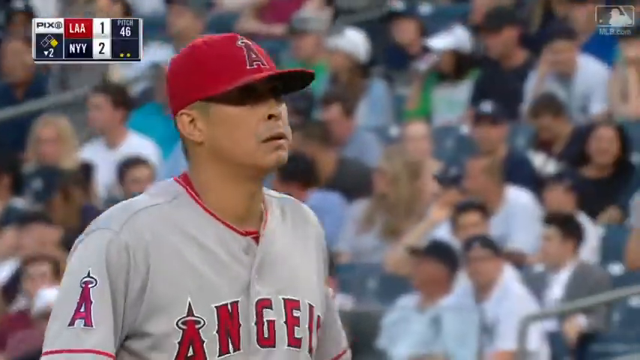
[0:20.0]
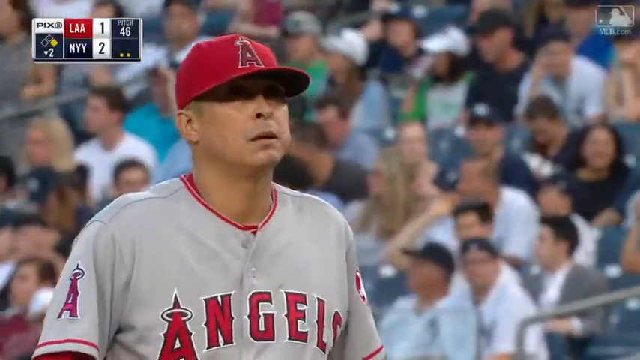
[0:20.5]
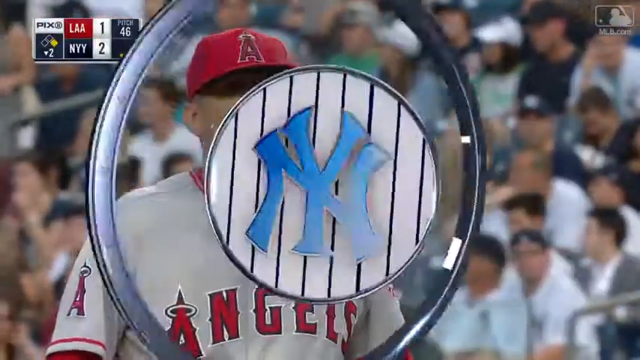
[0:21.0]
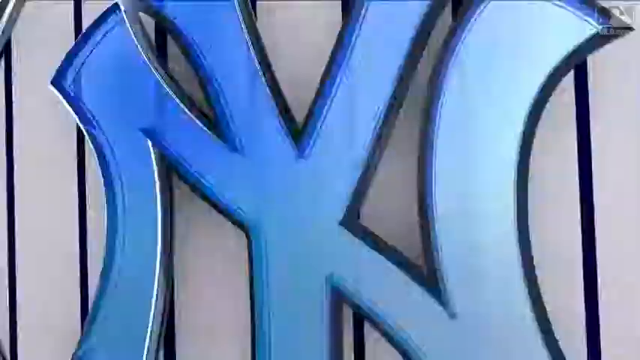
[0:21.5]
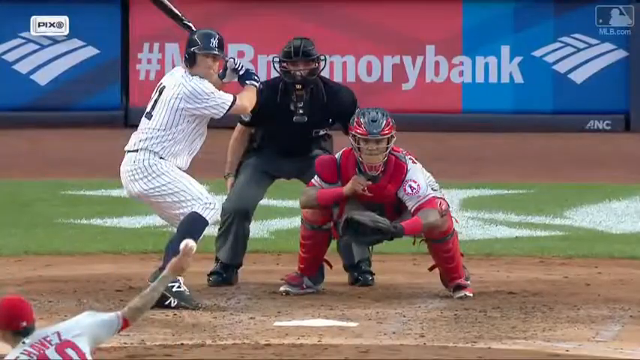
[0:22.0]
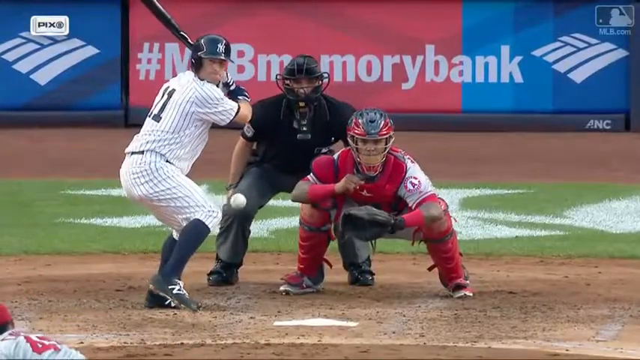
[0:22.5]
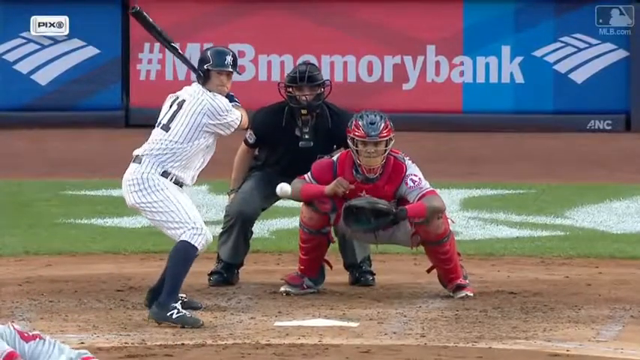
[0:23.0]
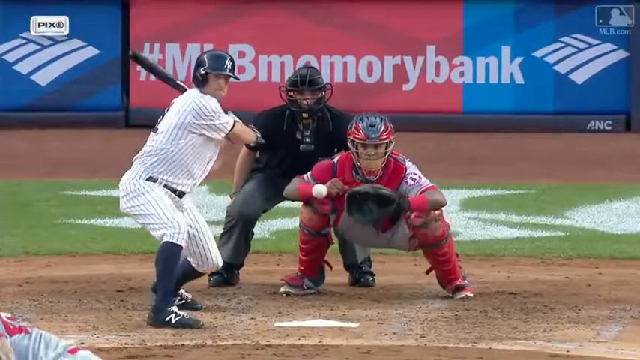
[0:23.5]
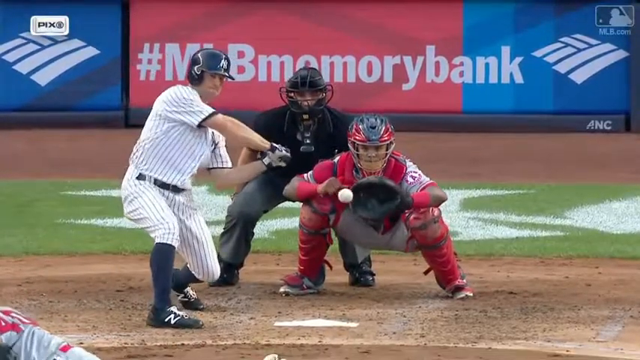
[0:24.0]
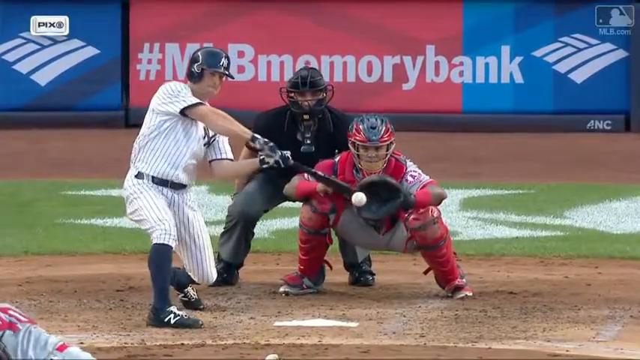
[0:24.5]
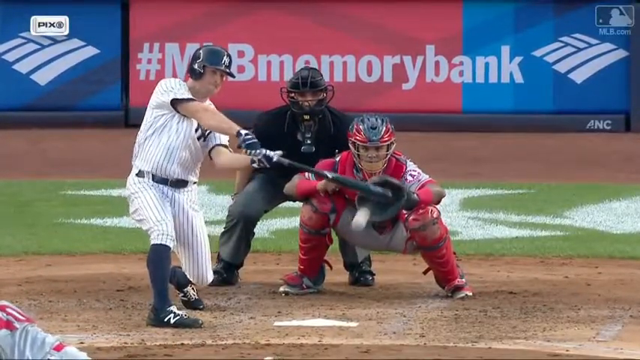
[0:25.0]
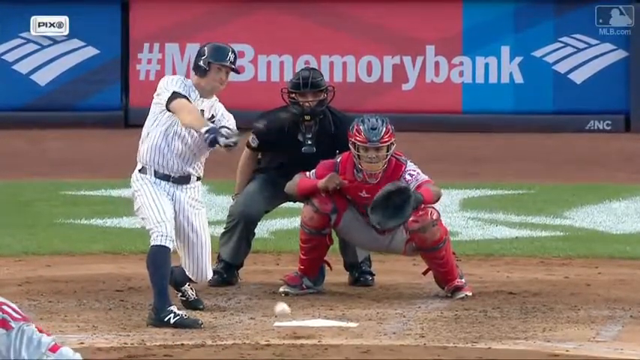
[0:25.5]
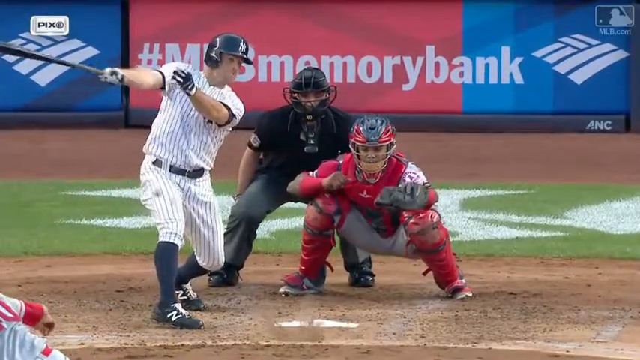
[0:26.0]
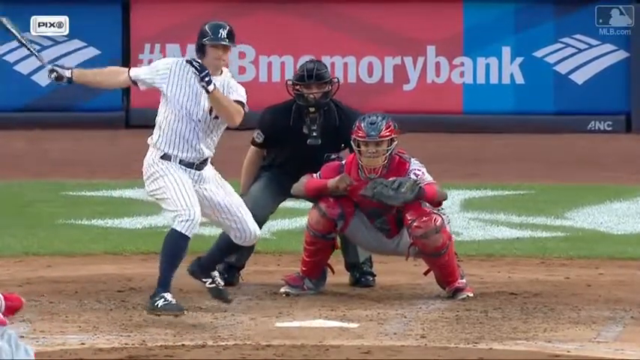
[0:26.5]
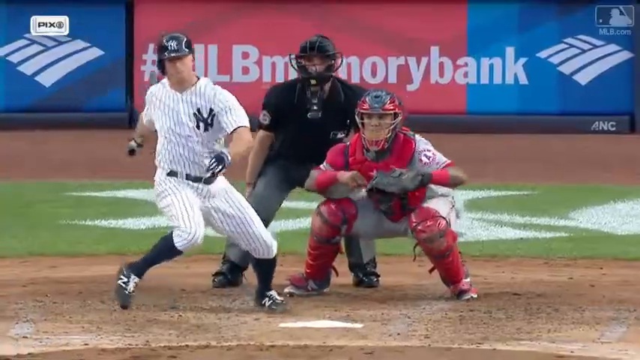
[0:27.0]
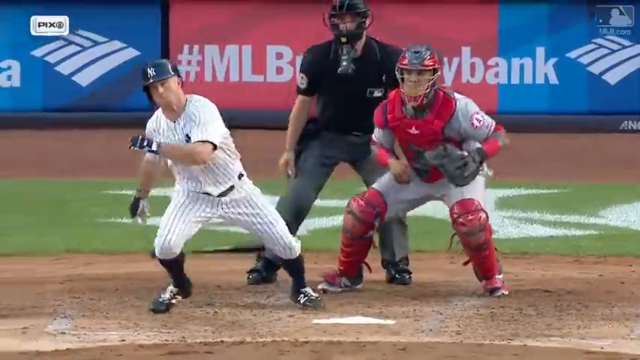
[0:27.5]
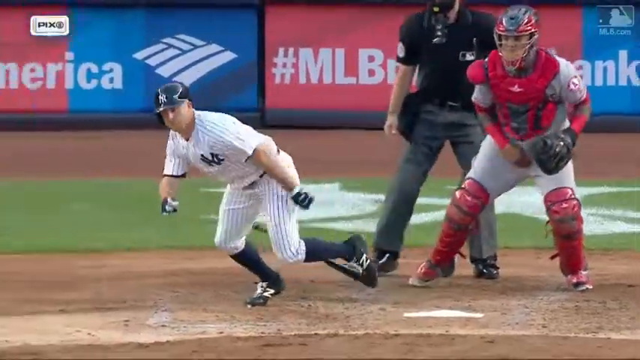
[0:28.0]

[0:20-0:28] On the left-hand side of the screen is "PIX", and in the upper right-hand corner is what looks like "MLB.com". The score shows LAA with one and the New York Yankees with two, along with "Pitch 46" and a "+2". A Yankees player, apparently number 11, hits the ball, shown in slow motion, and starts to run, with only his right foot on the ground and his left leg bent.